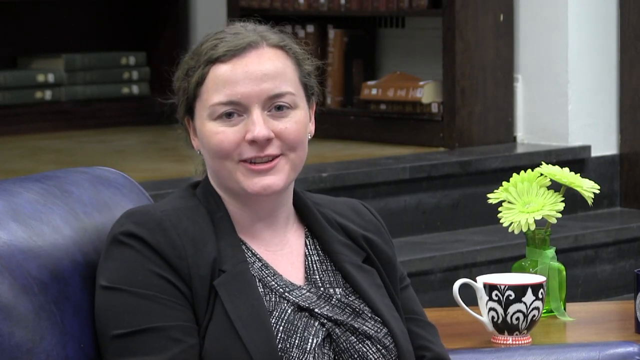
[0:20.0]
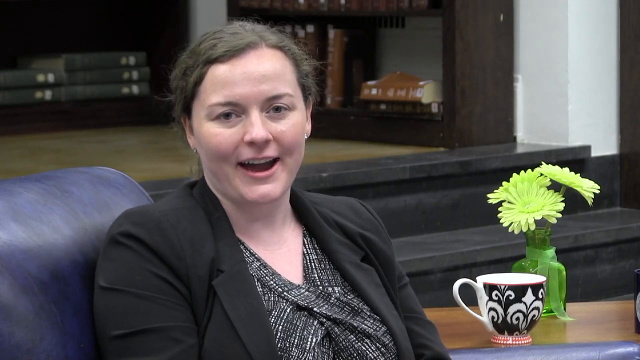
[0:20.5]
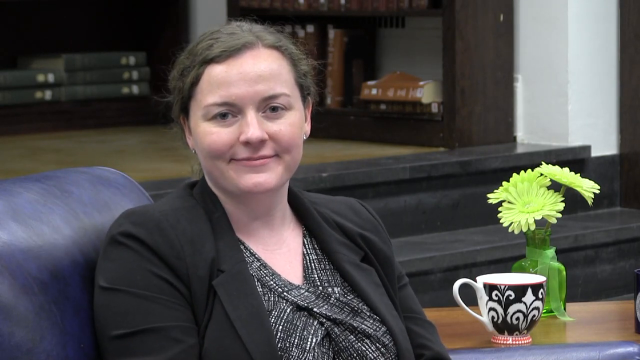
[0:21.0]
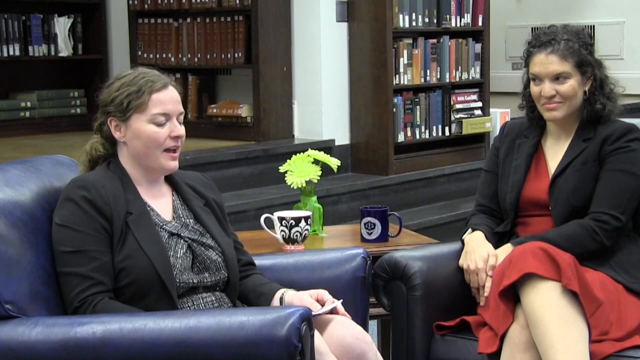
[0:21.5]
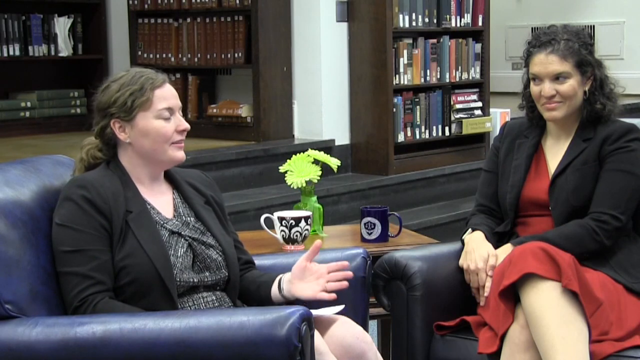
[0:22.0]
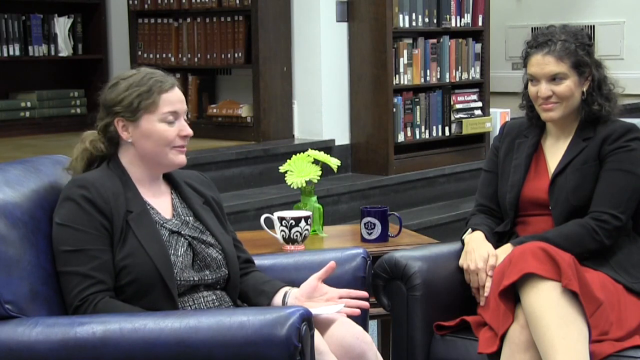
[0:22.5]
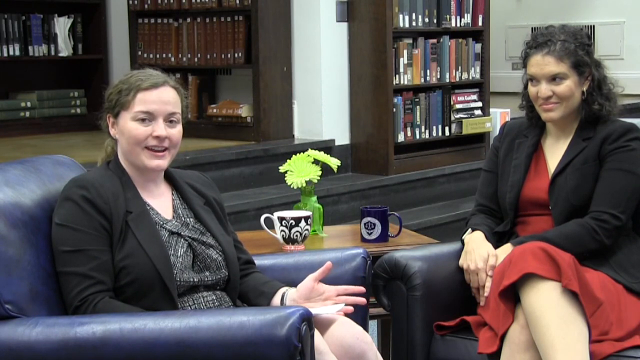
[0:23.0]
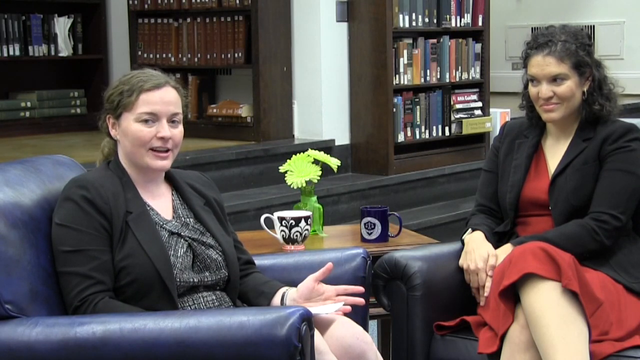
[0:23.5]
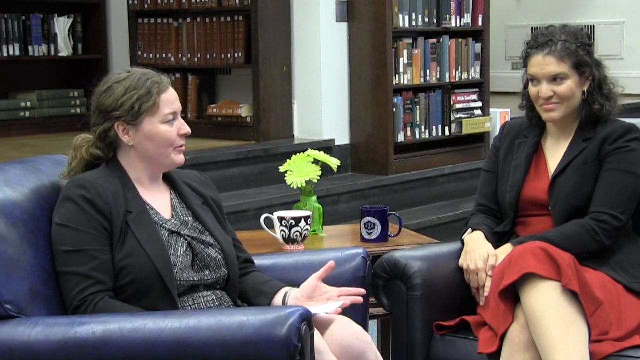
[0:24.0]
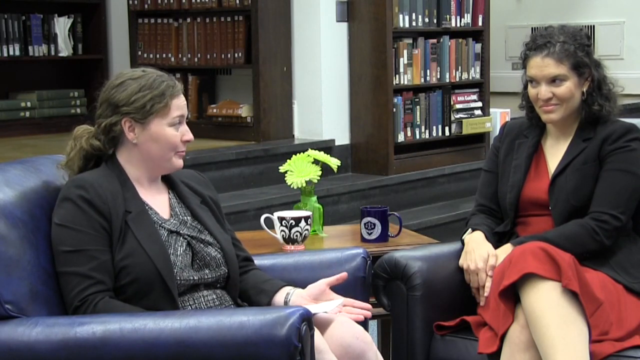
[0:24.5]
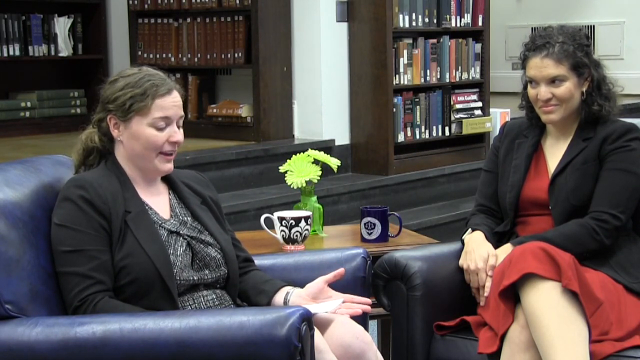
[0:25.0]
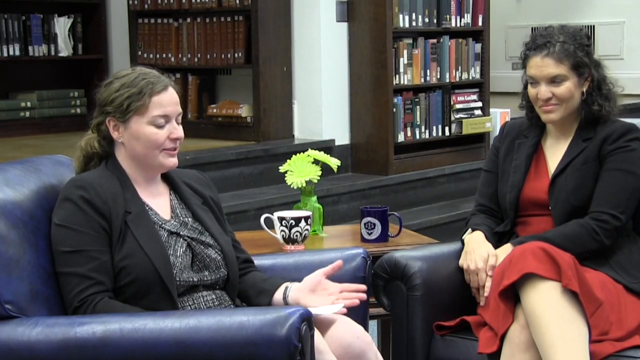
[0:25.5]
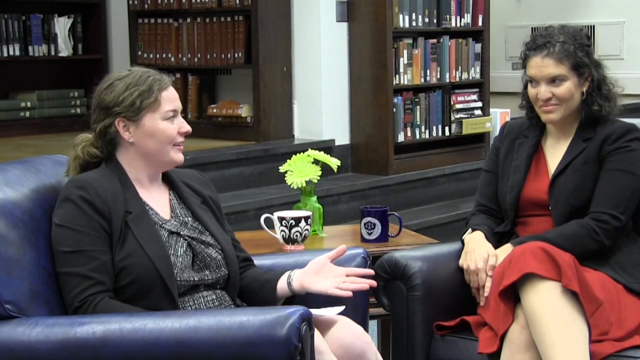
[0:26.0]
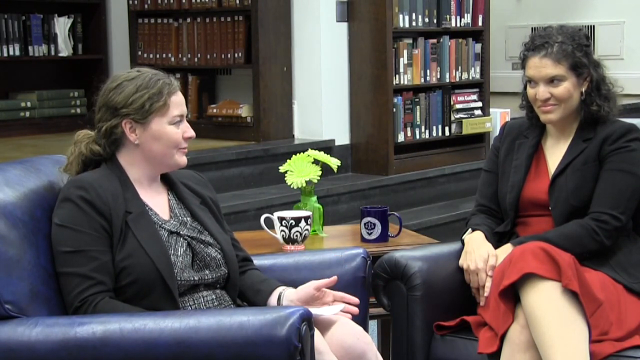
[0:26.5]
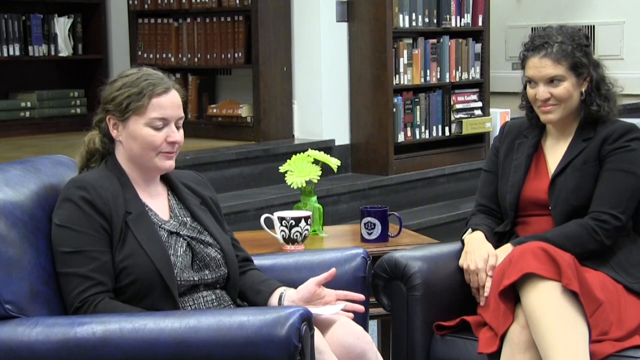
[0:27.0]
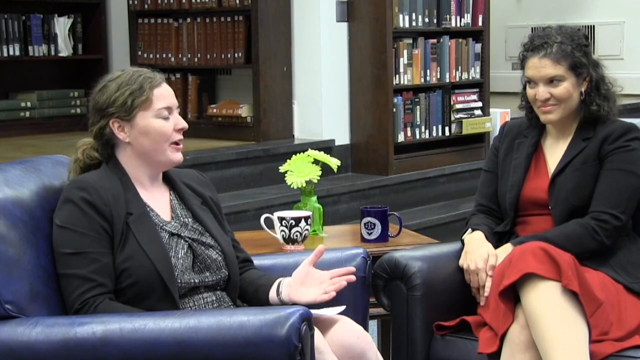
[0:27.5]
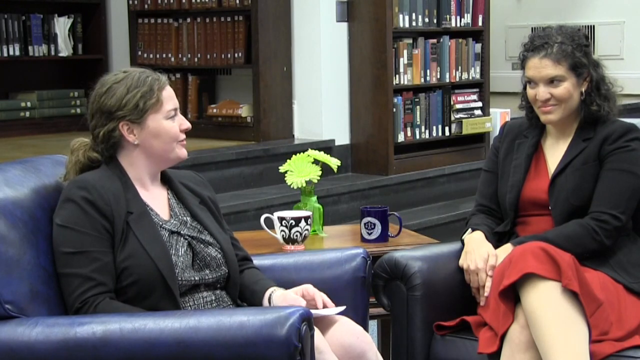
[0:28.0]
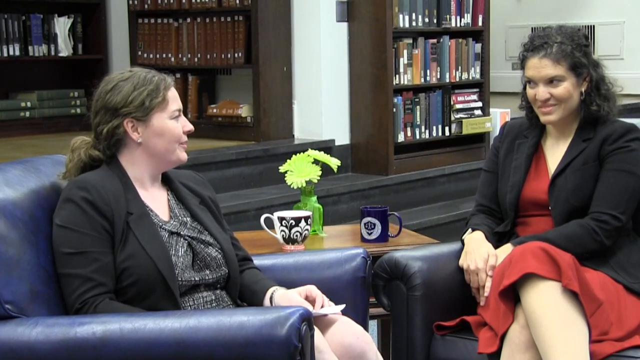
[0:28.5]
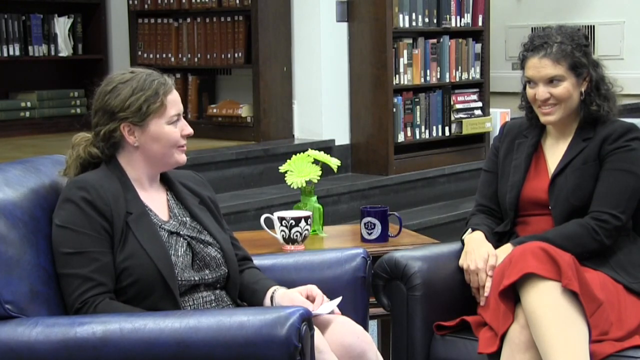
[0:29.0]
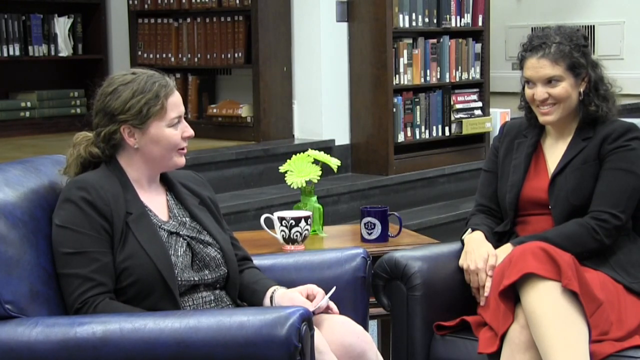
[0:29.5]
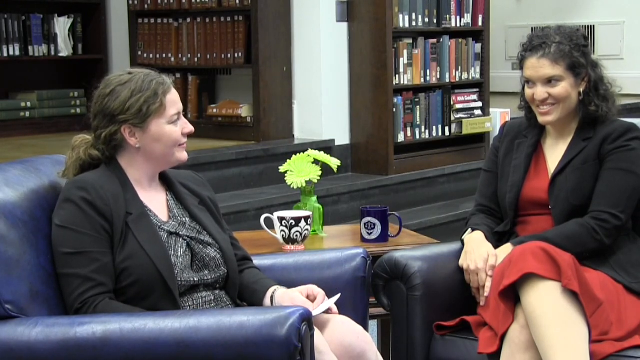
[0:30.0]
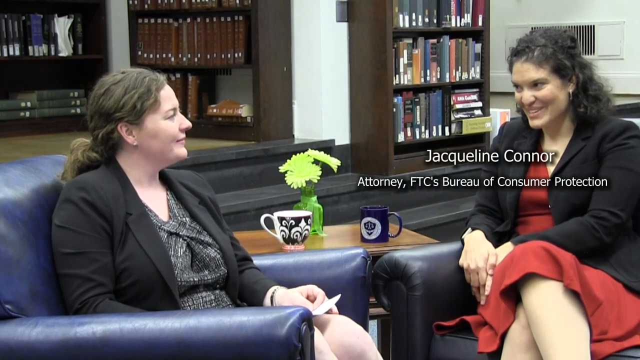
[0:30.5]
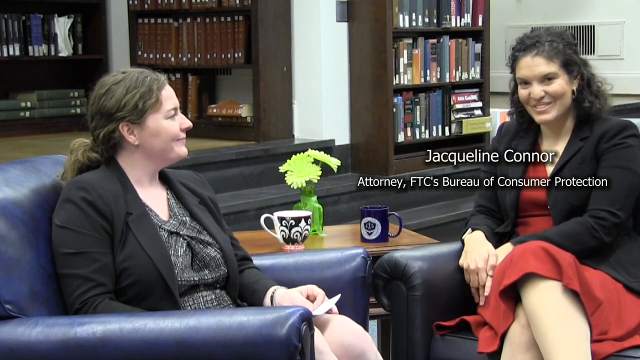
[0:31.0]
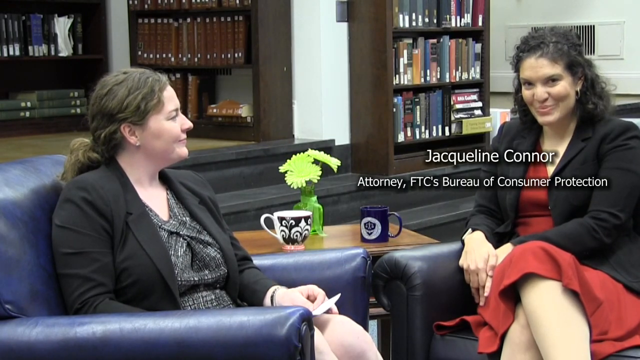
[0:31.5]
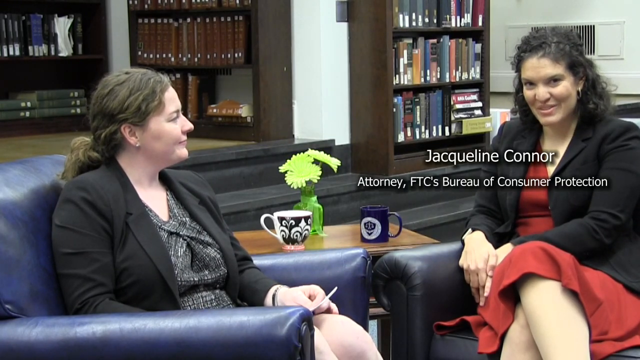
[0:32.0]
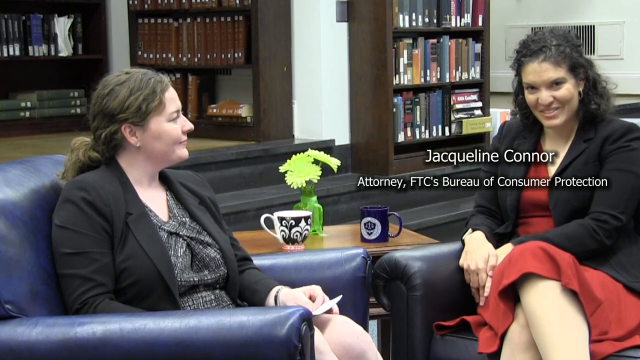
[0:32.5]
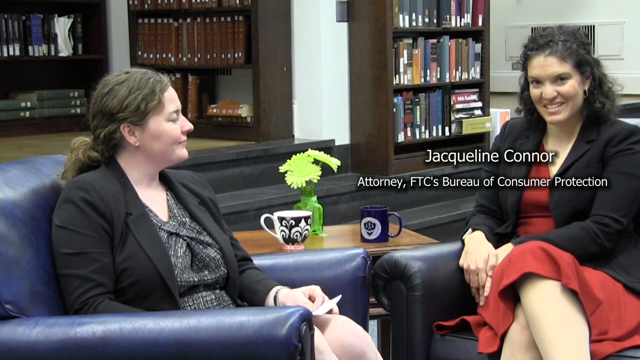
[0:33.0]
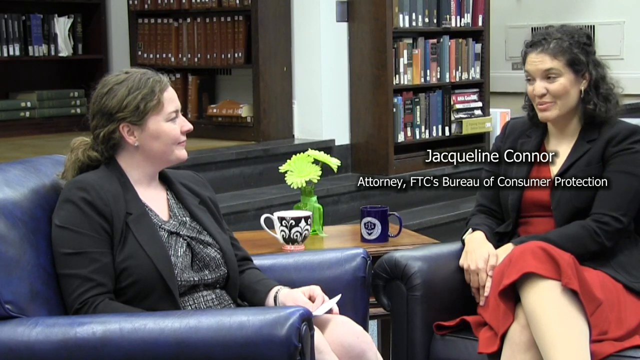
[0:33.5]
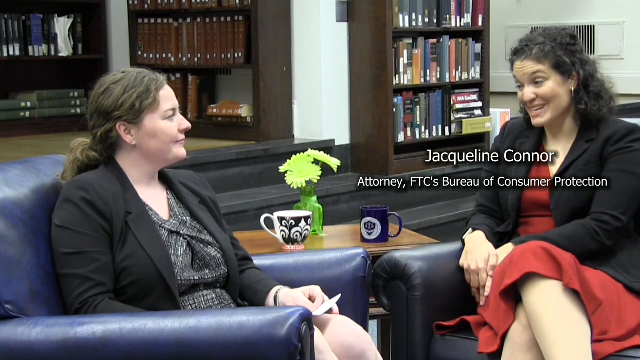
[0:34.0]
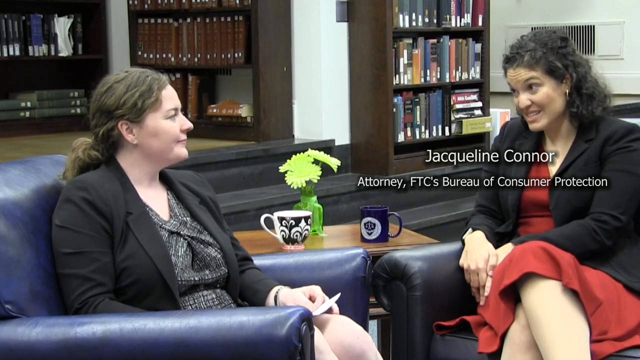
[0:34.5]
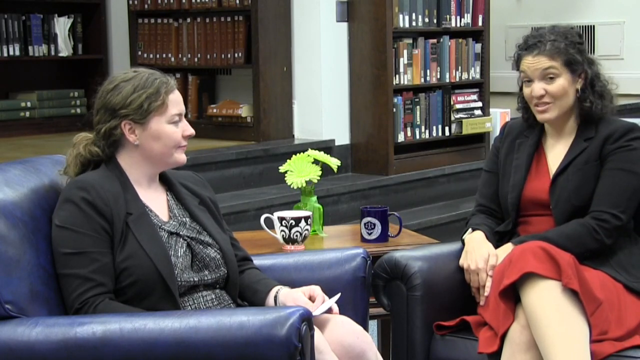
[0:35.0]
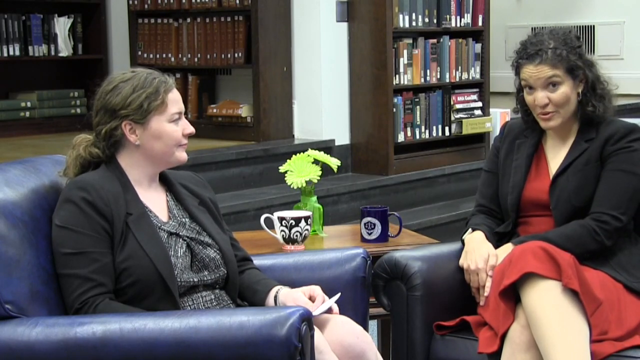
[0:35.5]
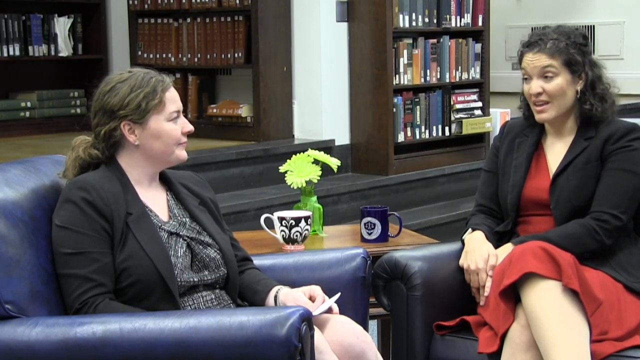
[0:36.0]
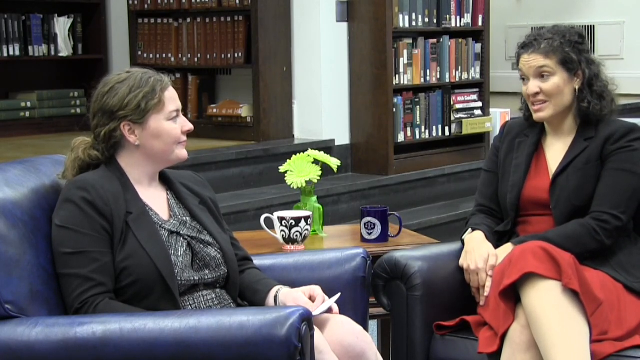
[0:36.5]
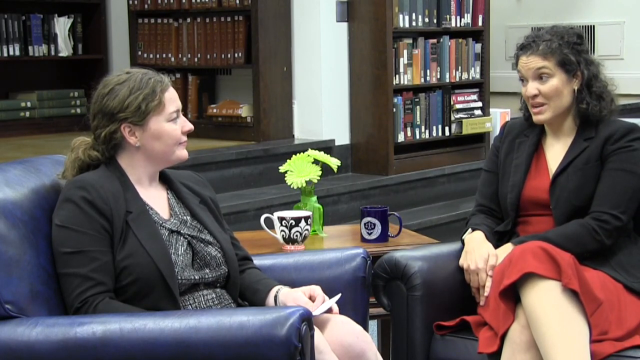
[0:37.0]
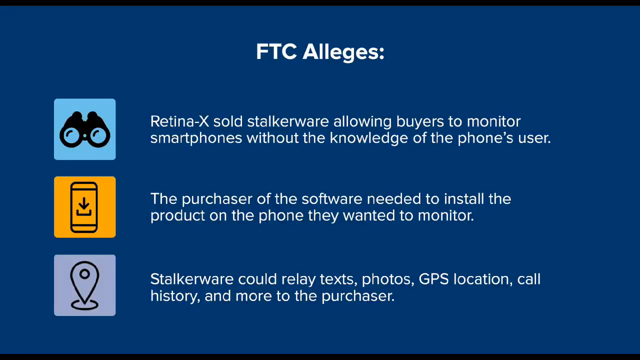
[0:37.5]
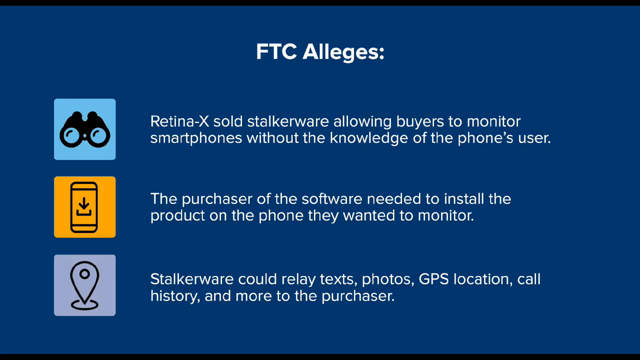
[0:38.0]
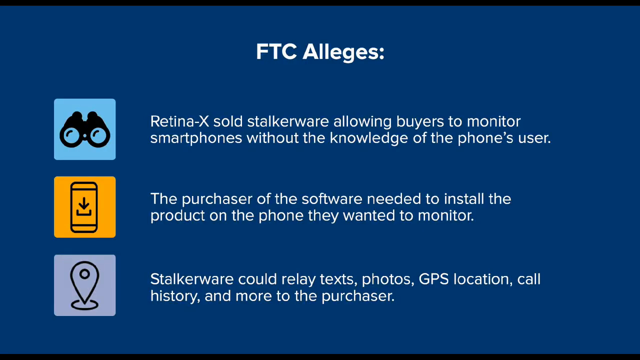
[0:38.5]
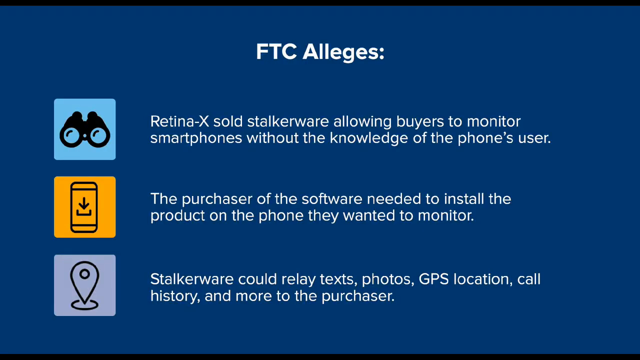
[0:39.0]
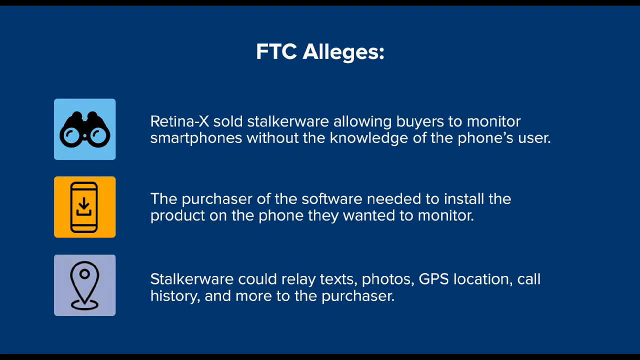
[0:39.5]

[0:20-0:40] A woman talks with another woman who wears a red dress. On-screen text identifies one of them as an attorney with a Bureau. The word "stalkerware" appears. Green flowers are on the table, and one woman has a cup beside her that is red or black and white. There are books in the background, and she sits in a blue chair. The two go back and forth in conversation.